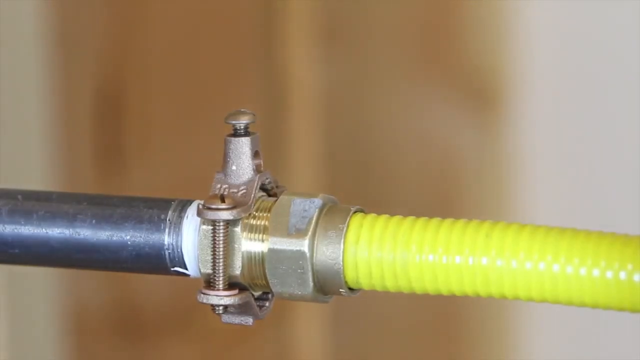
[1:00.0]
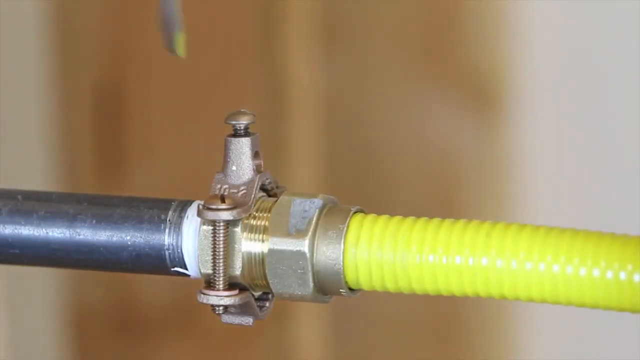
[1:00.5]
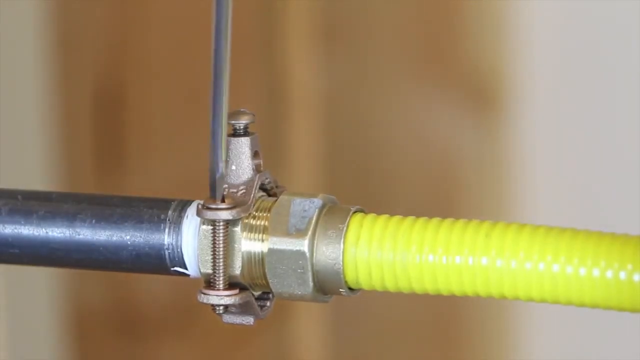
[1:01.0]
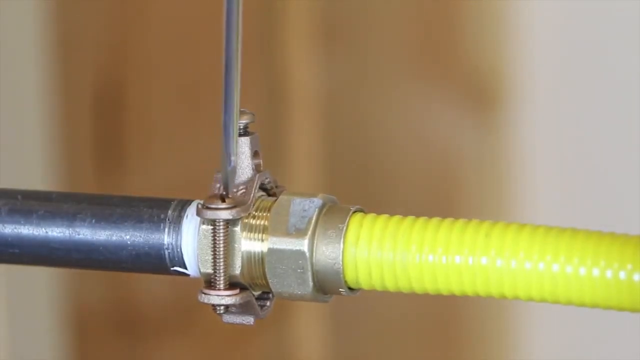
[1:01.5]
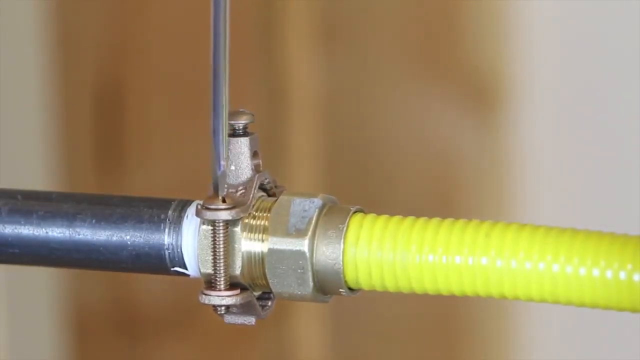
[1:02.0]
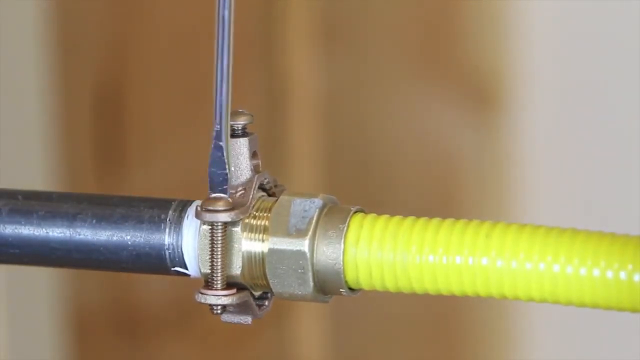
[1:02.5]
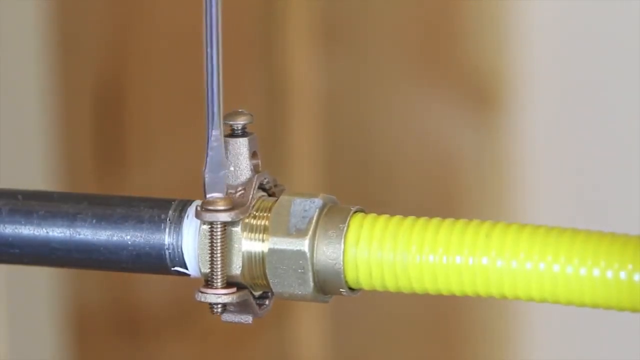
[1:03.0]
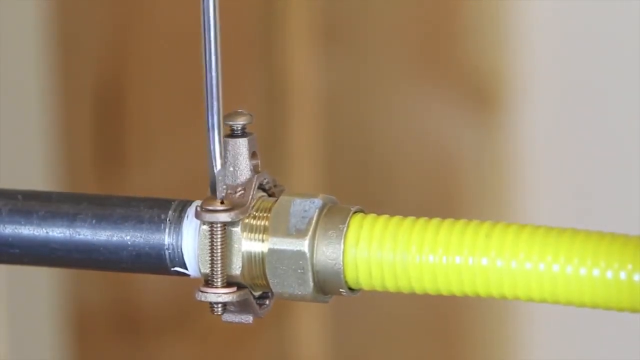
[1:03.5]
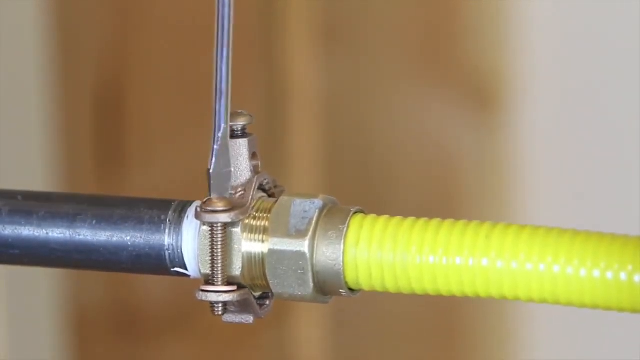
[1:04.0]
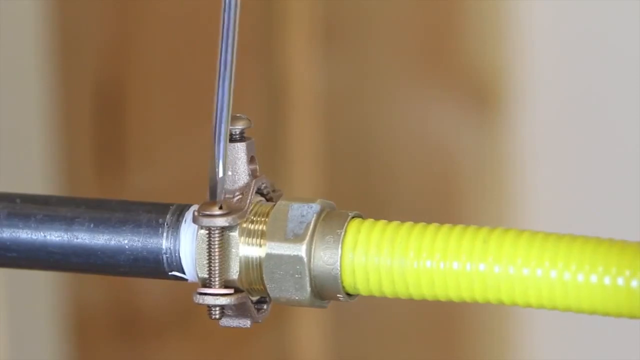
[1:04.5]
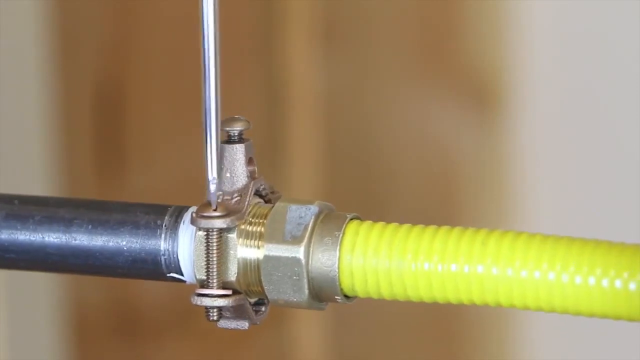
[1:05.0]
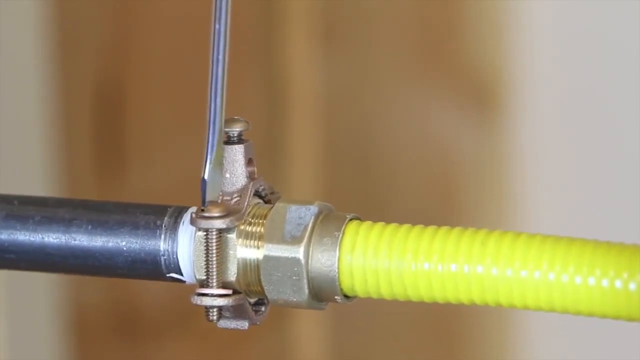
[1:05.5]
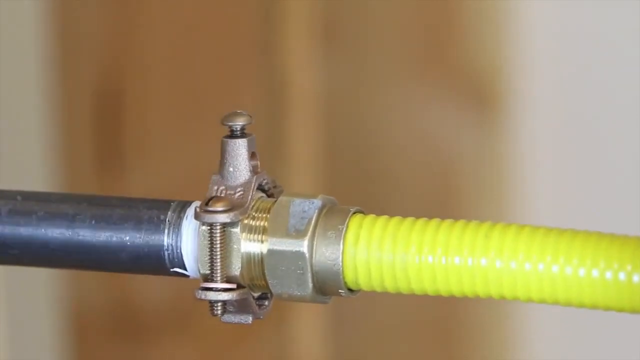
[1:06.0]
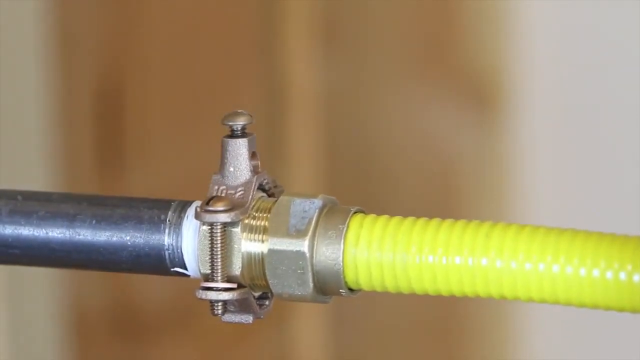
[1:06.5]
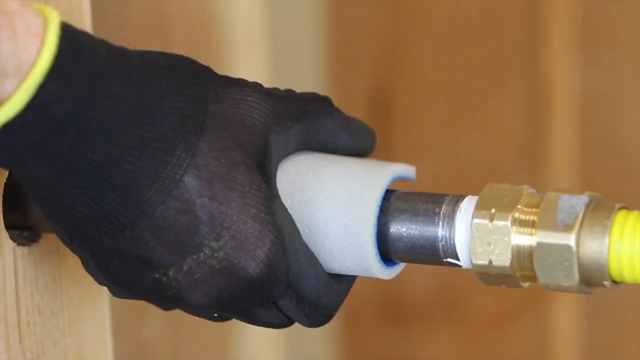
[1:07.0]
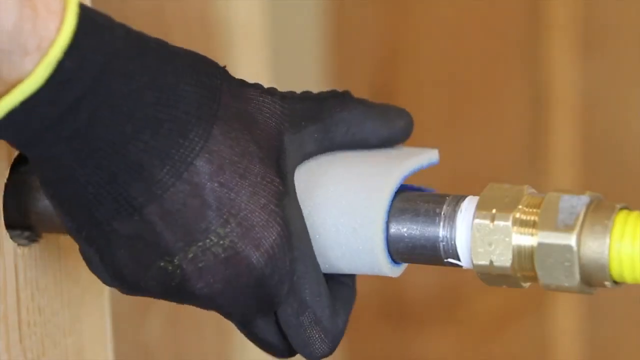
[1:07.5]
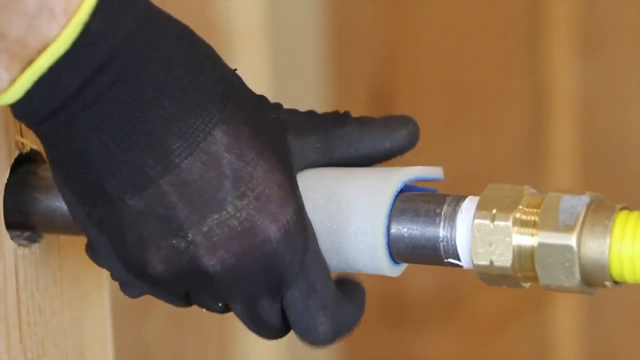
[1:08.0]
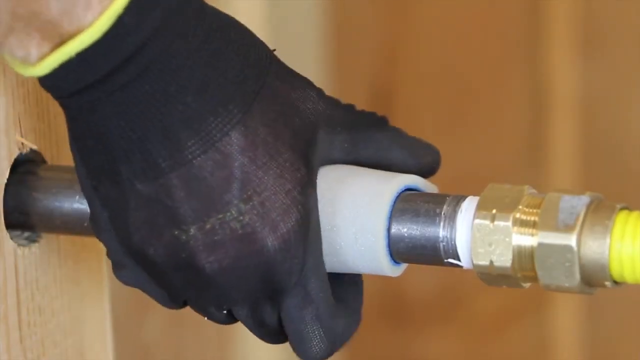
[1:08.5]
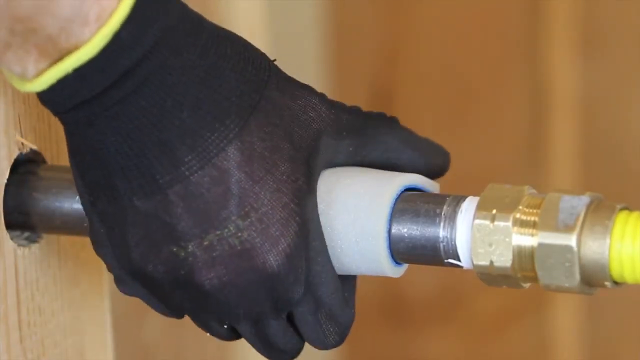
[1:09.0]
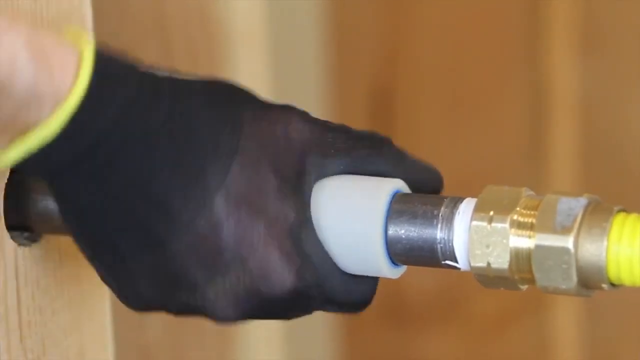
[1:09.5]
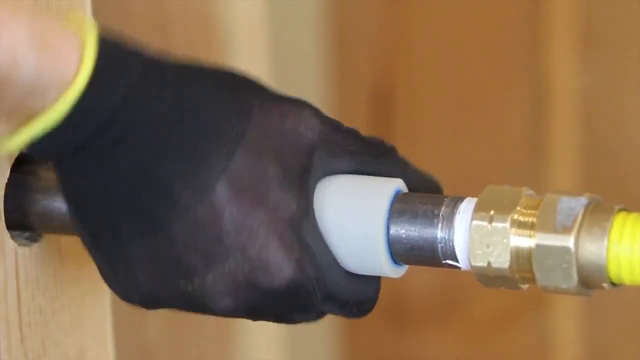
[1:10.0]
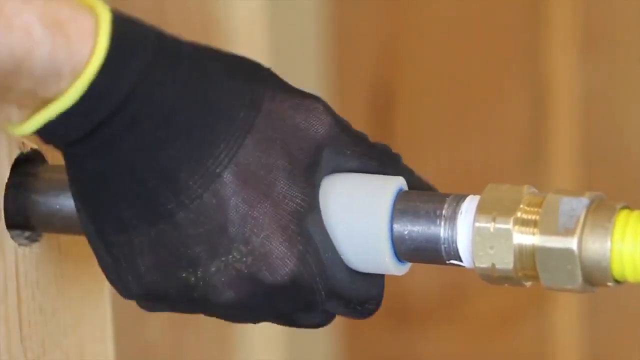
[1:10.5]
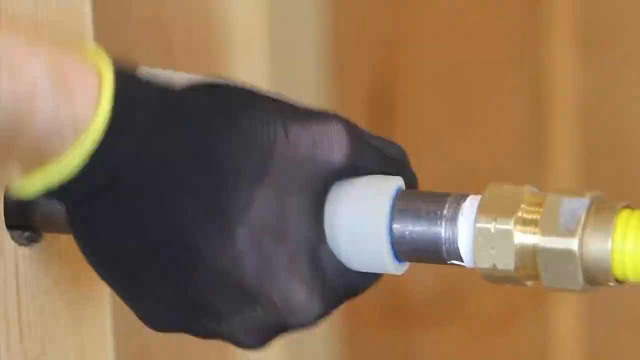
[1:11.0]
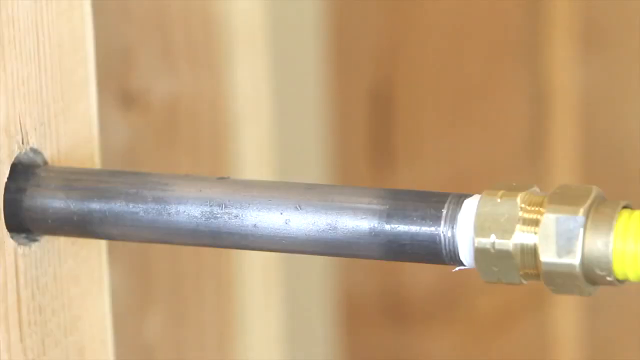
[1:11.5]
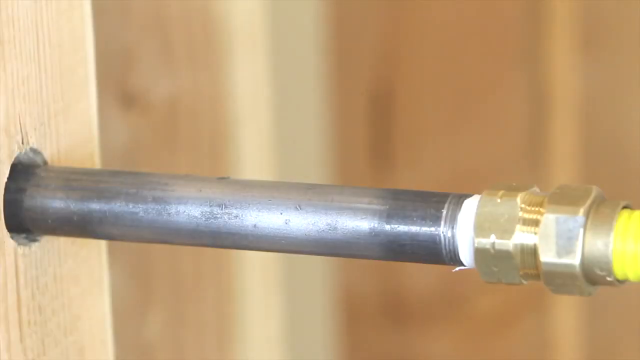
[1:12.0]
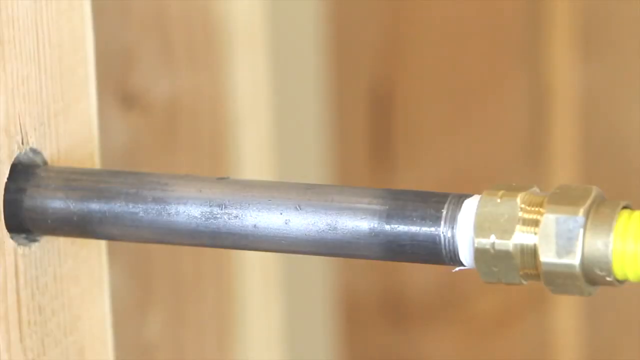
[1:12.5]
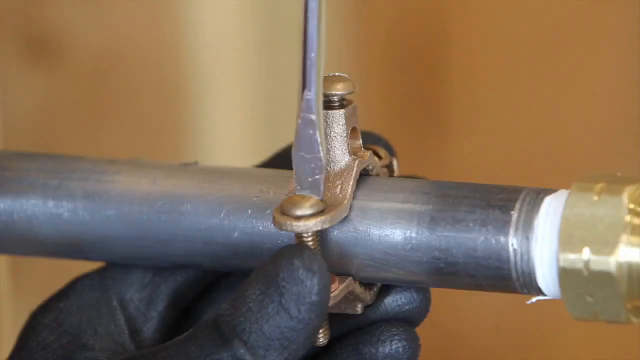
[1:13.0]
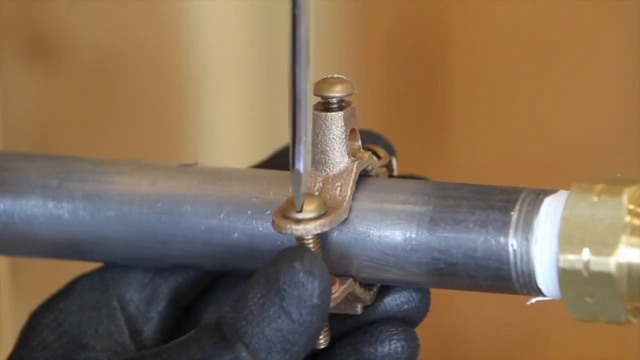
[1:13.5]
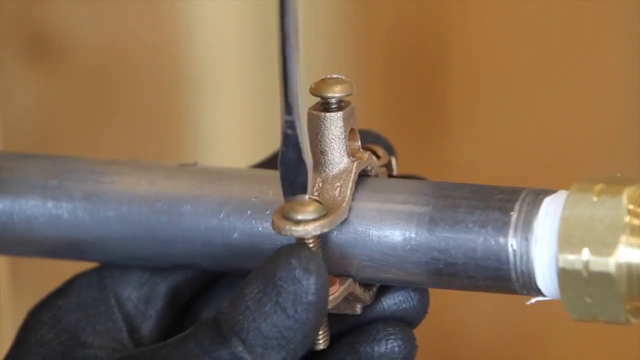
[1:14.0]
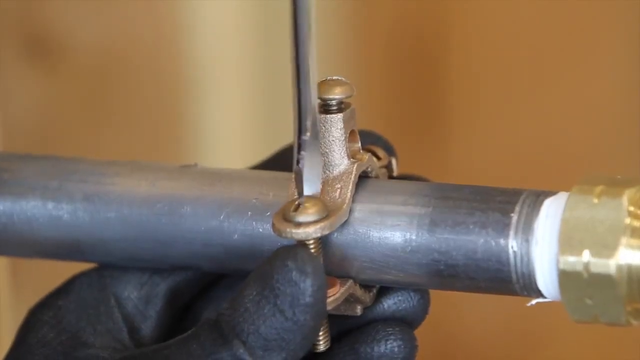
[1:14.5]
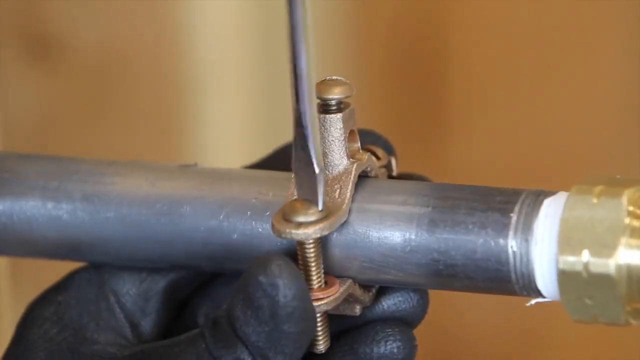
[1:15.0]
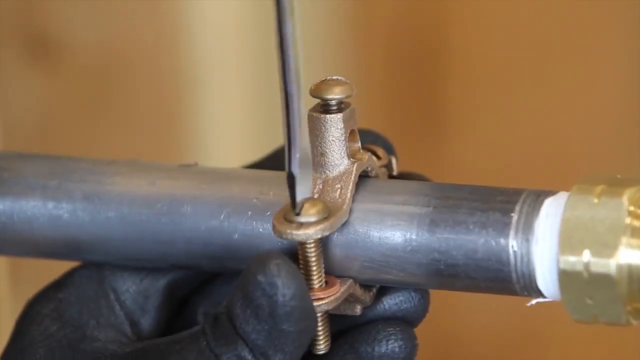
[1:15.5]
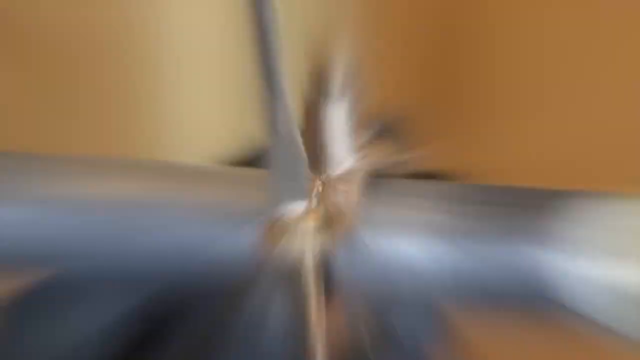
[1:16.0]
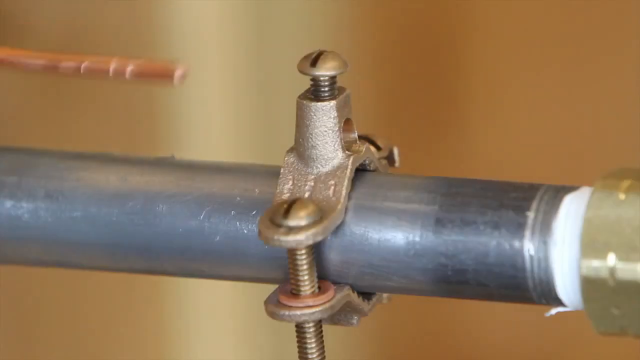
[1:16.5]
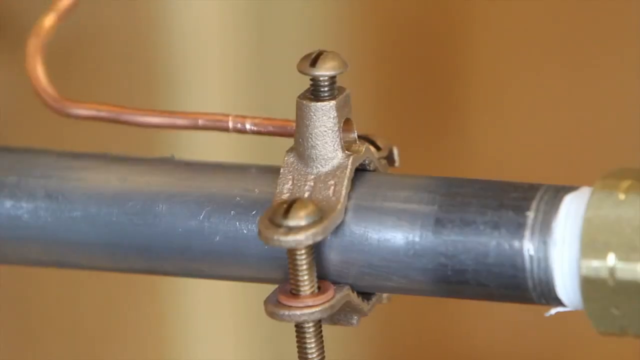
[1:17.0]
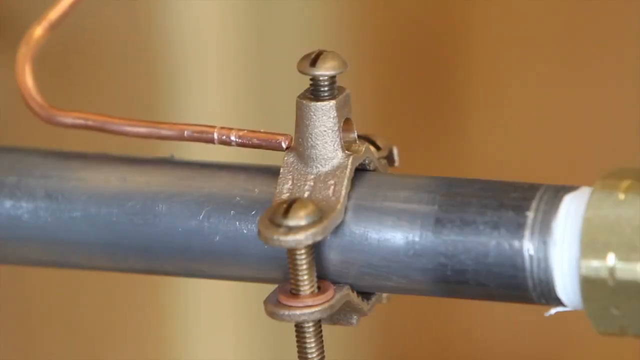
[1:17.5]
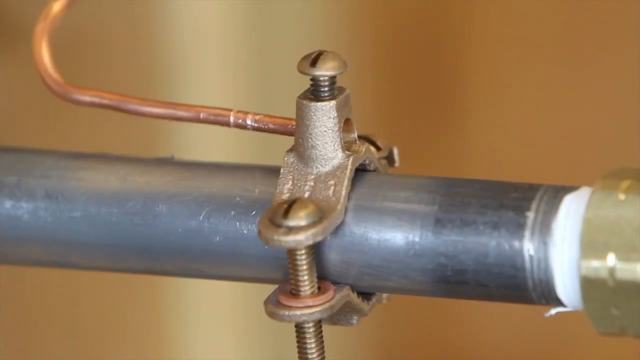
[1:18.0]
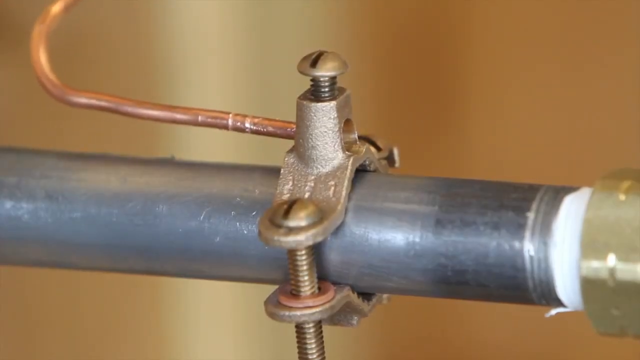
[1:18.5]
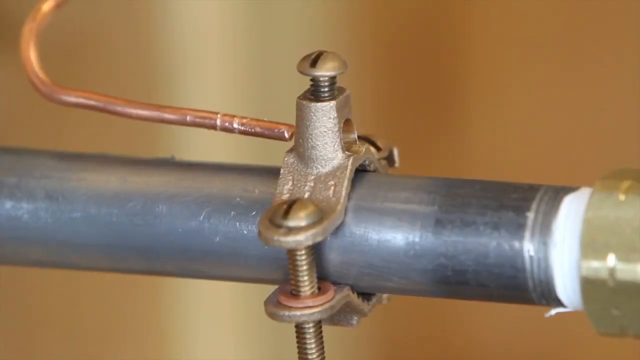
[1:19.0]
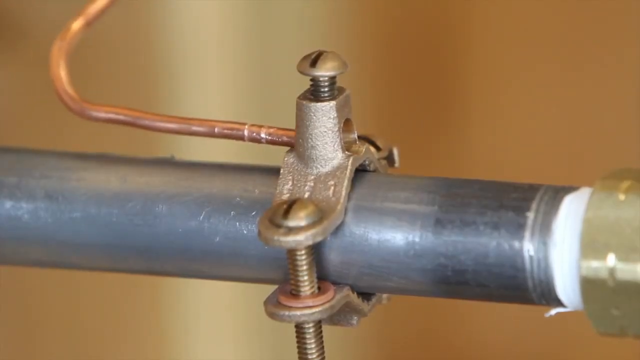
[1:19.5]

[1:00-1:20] The pipe and the hose run parallel to the ground, with the pipe on the left, the clamp in the middle, and the hose coming out on the right. A screwdriver goes into the clamp and turns clockwise, apparently tightening the screw. A man's hand in a black glove appears; he has a towel of some sort over one part of the pipe and twists it toward himself, toward the camera. From another angle, he again has the screwdriver in a screw in the clamp and screws one of the screws tighter. Then a copper wire going through the hole of one of the clamps is moved slightly.